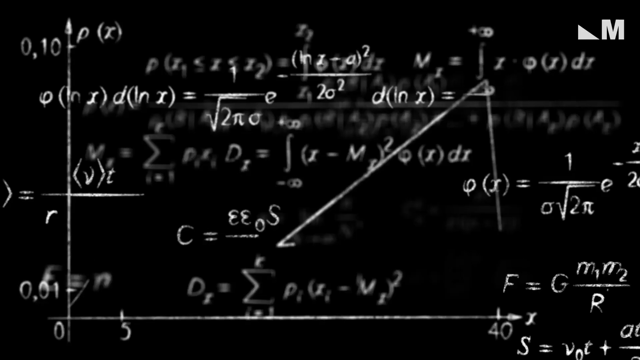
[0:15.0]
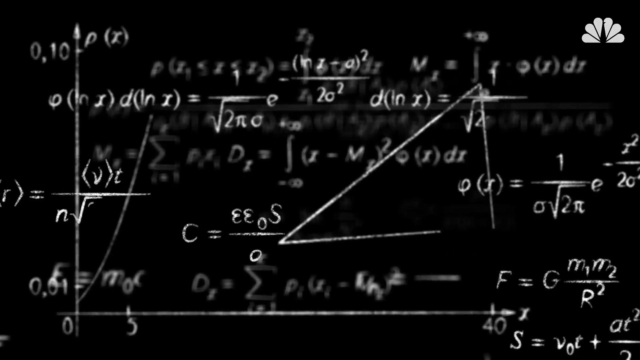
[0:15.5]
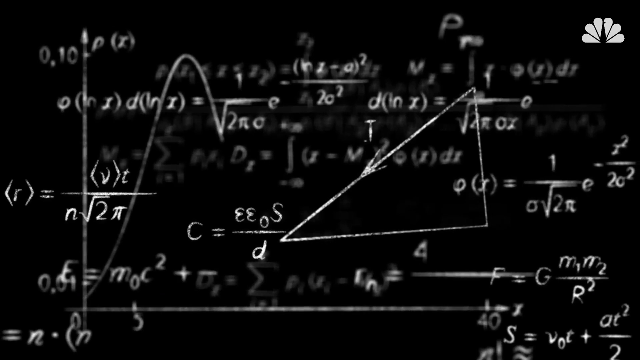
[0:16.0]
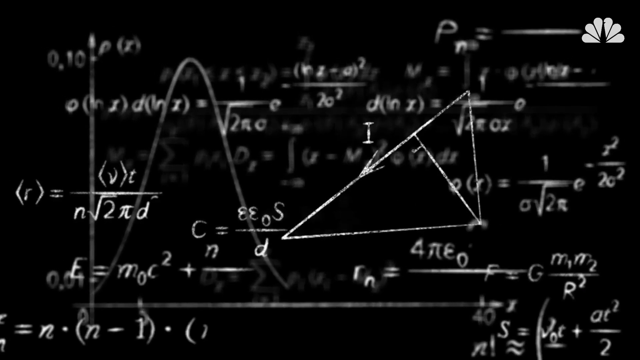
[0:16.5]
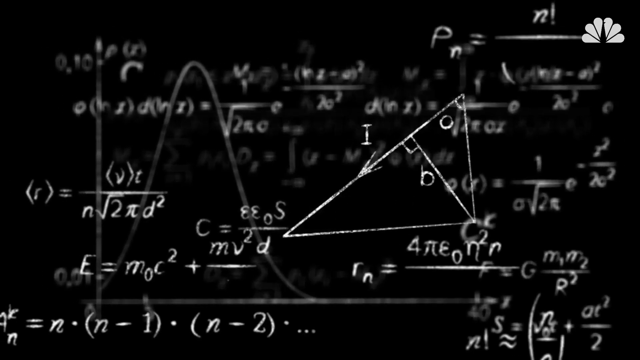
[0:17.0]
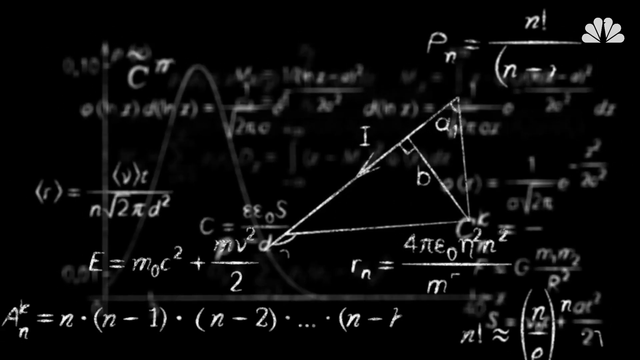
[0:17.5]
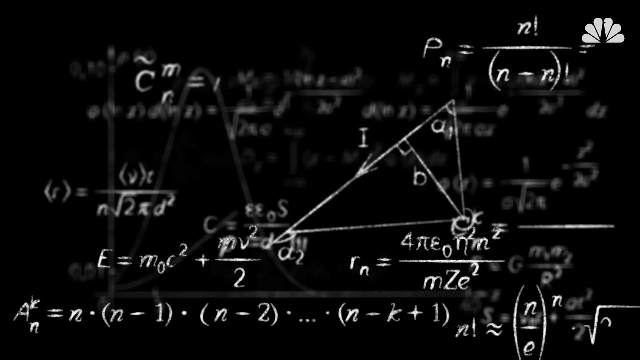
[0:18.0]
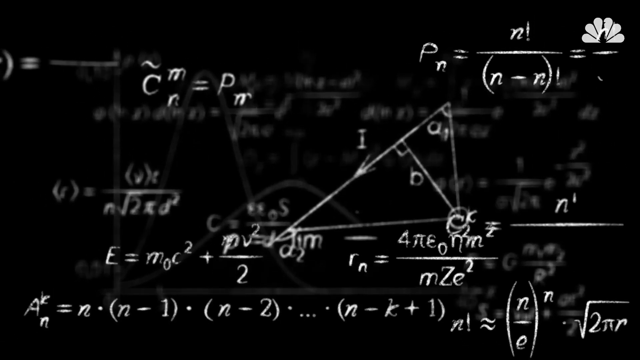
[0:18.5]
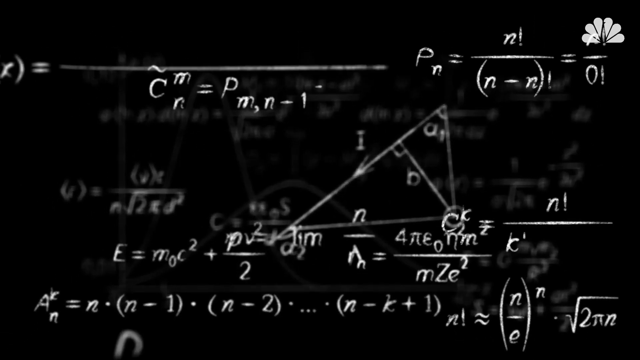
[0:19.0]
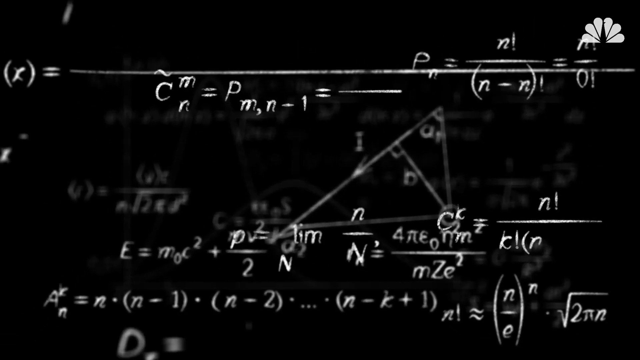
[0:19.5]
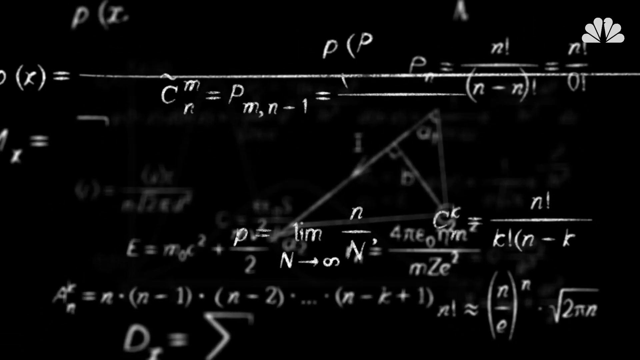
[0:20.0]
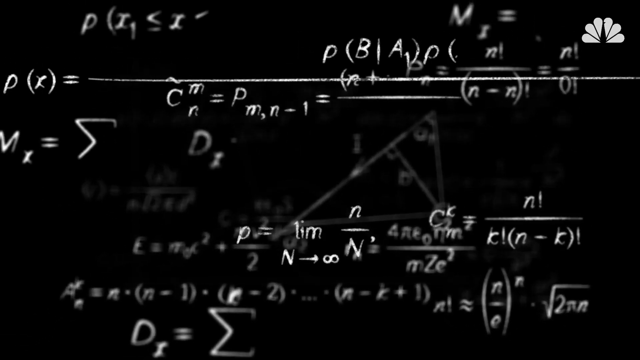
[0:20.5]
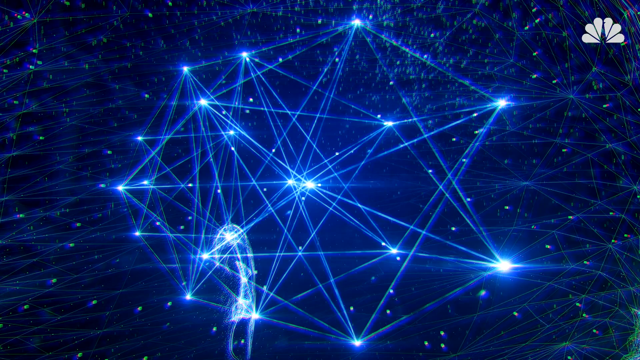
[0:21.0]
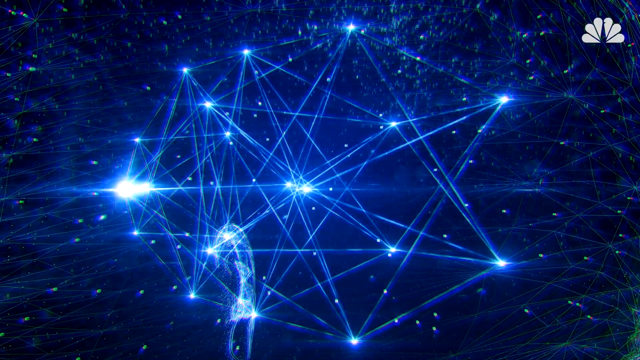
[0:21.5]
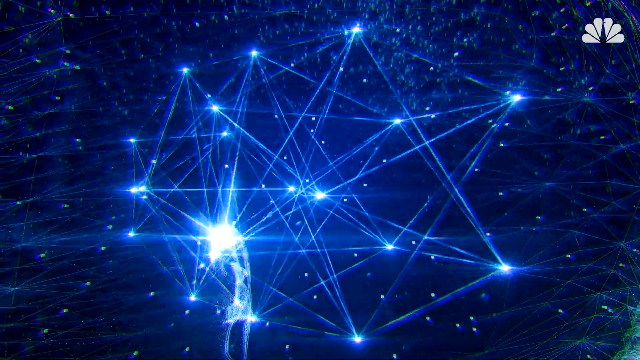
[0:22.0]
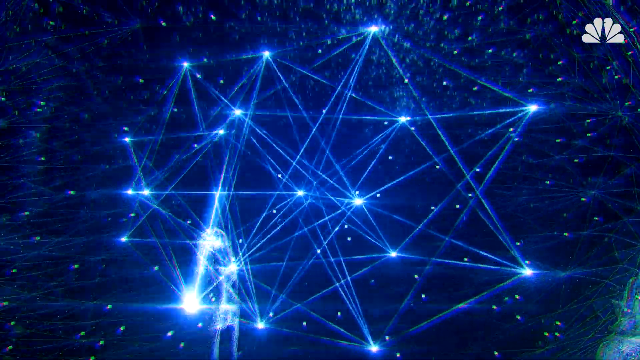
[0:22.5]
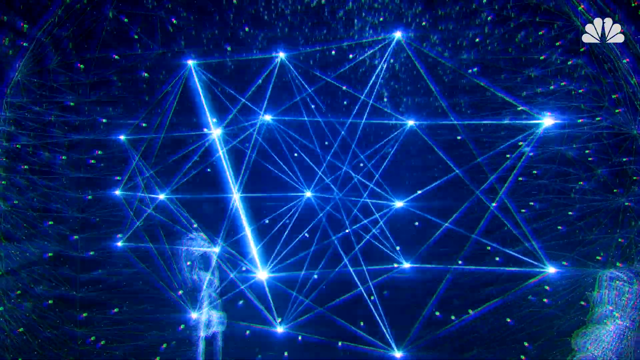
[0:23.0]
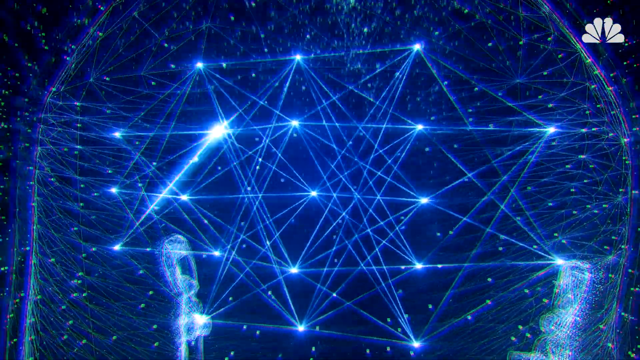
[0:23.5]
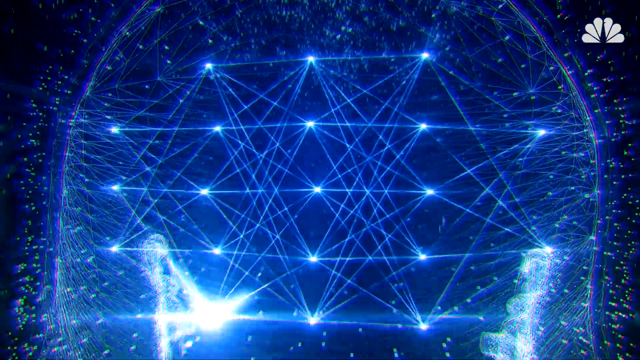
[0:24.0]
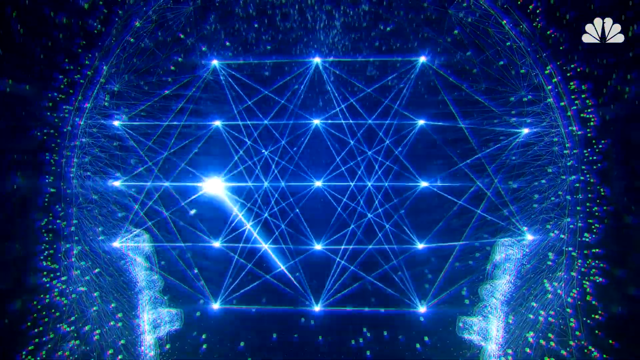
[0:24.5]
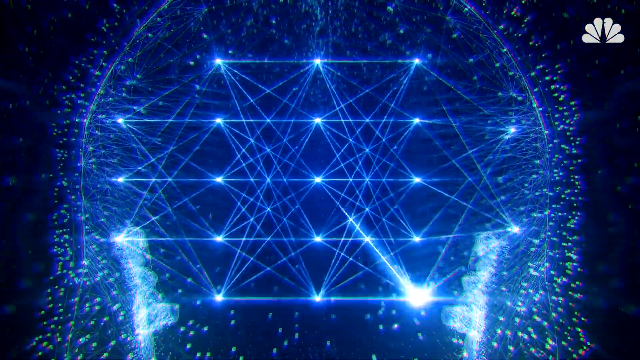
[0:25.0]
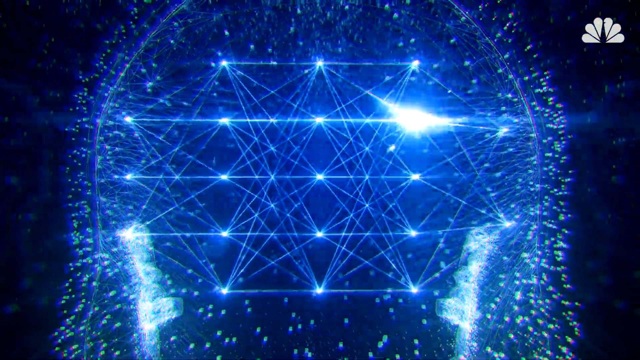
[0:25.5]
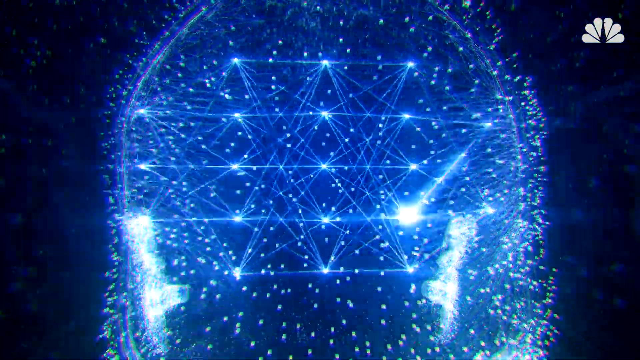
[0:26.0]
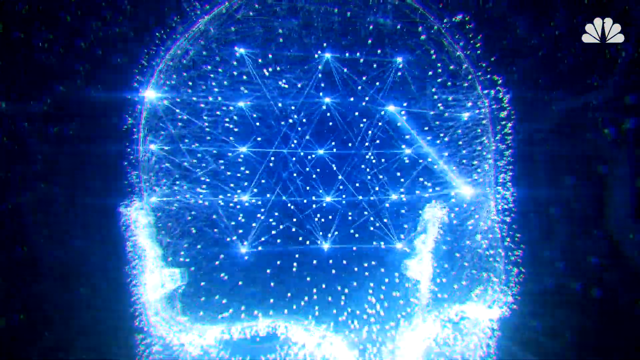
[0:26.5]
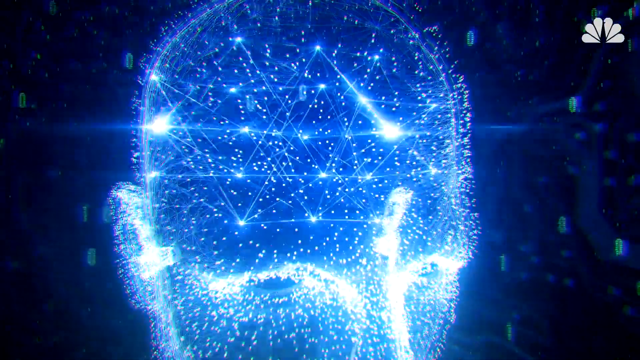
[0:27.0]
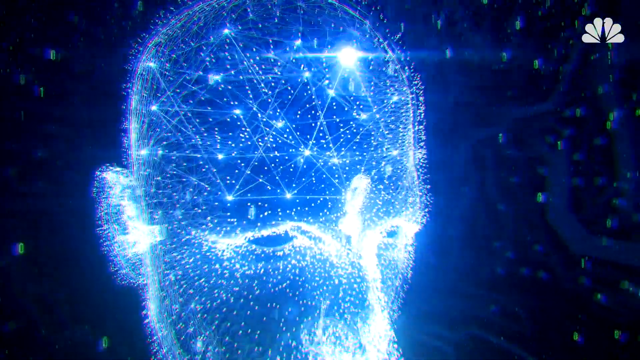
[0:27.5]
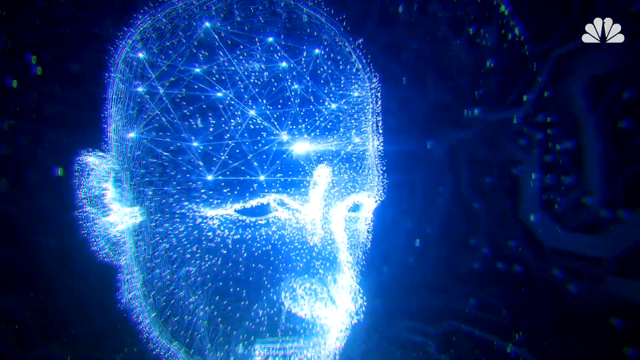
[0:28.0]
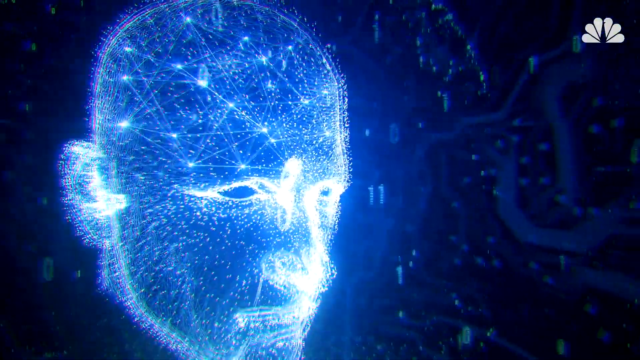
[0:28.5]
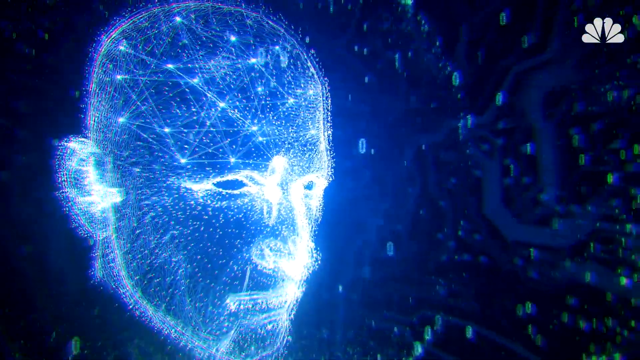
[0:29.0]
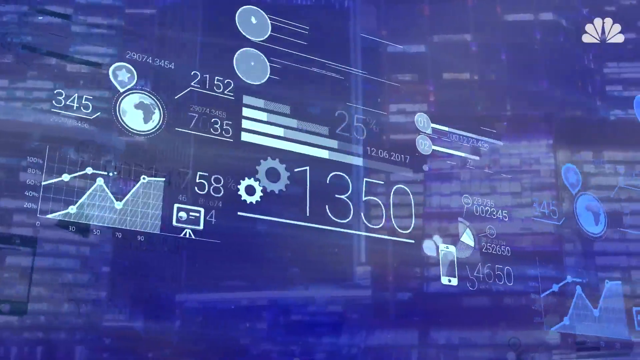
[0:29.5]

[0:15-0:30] Against what is almost like a black background, a jumble of mathematical equations, formulas and angles in white chalk appears, with no one drawing them, and the view pans out a little. The scene then switches to a blue cosmic background where a light bounces through many lines and points; as the view pans out, these turn out to form the outline of a brain, almost as if showing synapses firing. It seems to follow a single point of light bouncing around the brain, and then a more facial shape emerges. The video briefly switches to mathematical equations on a board, seen at an angle against a blue background. Toward the end, mathematical equations appear on more of a blue background, moving along the screen in succession, kind of like a ticker tape.